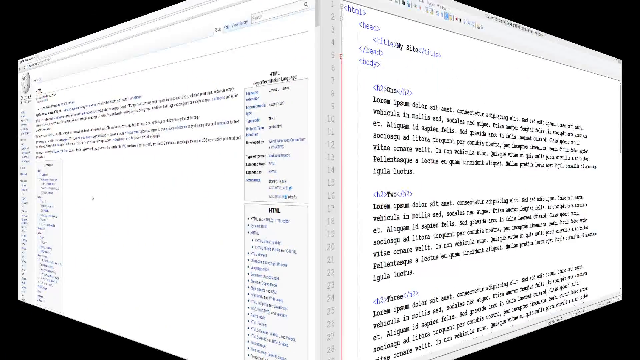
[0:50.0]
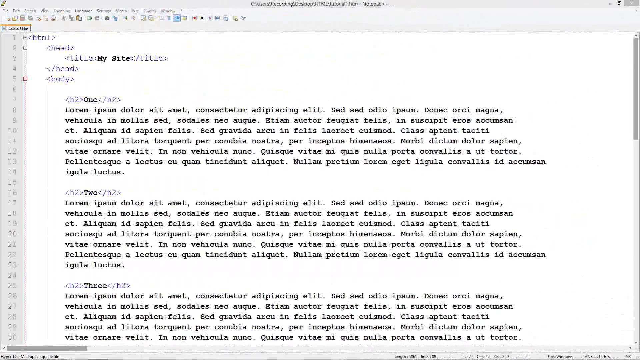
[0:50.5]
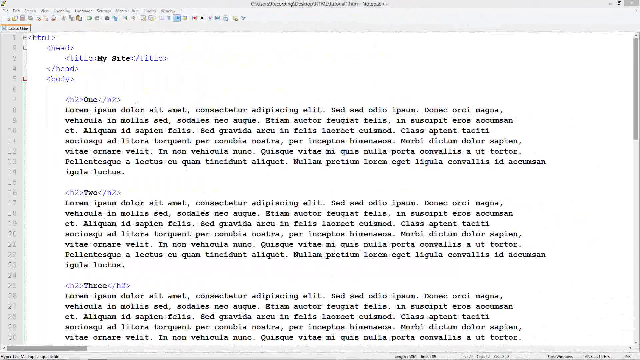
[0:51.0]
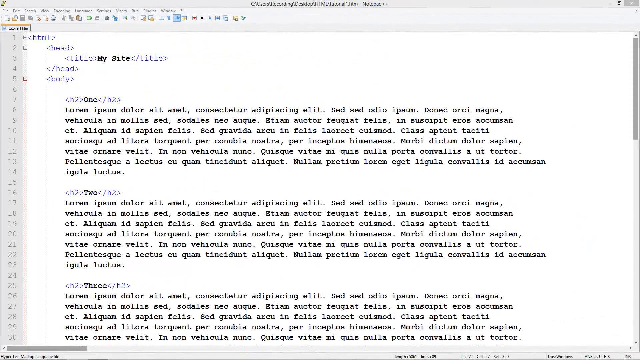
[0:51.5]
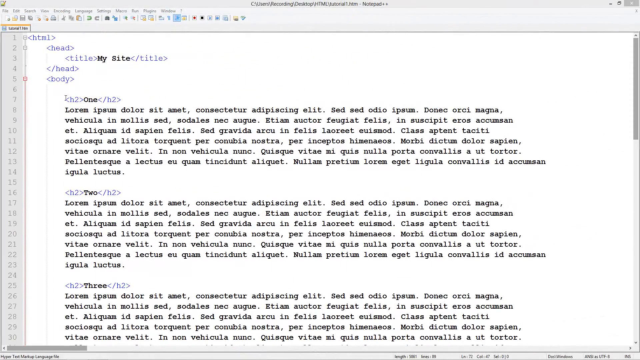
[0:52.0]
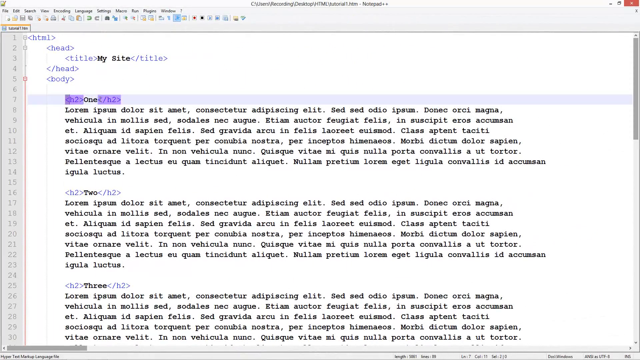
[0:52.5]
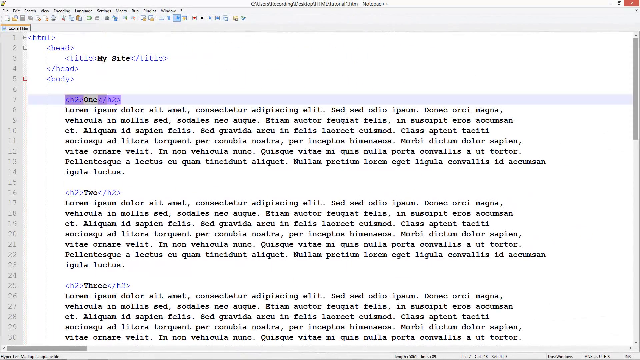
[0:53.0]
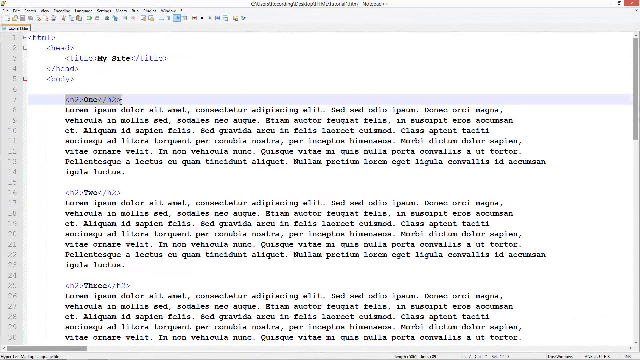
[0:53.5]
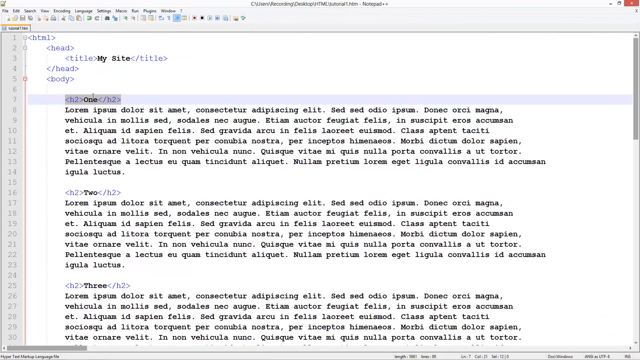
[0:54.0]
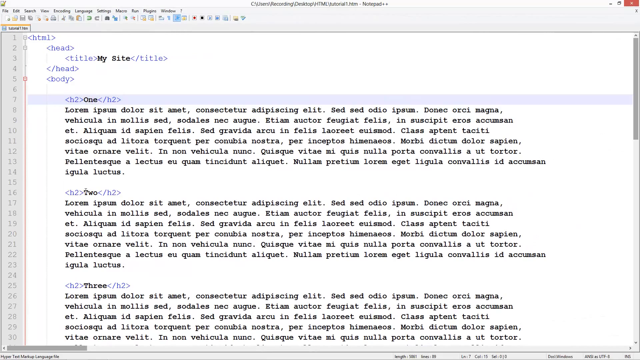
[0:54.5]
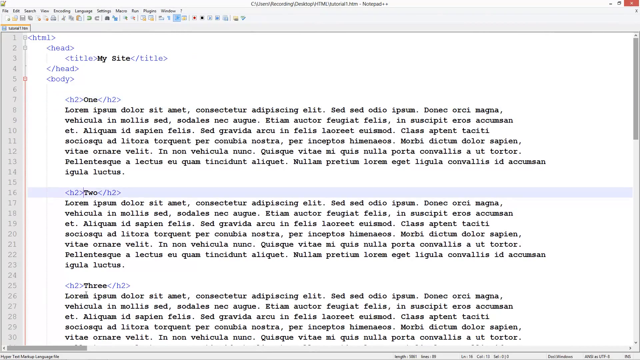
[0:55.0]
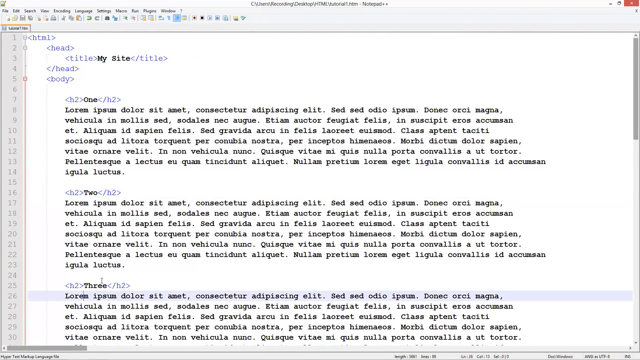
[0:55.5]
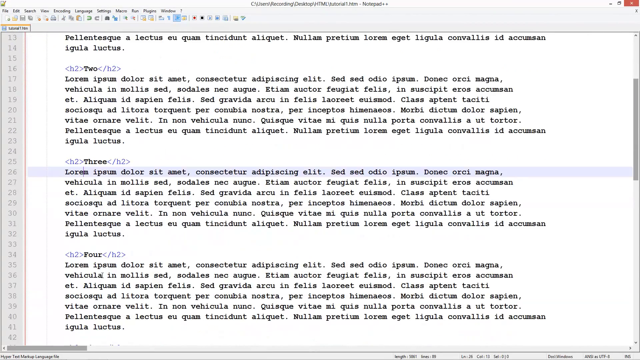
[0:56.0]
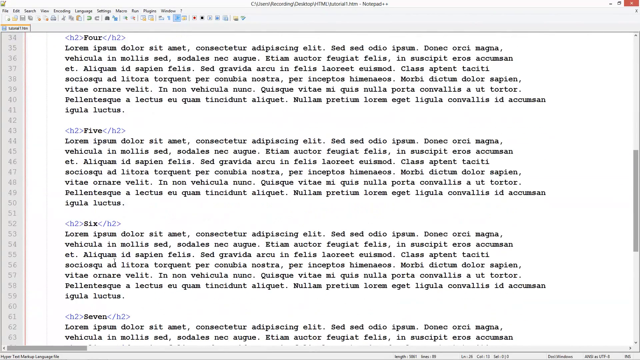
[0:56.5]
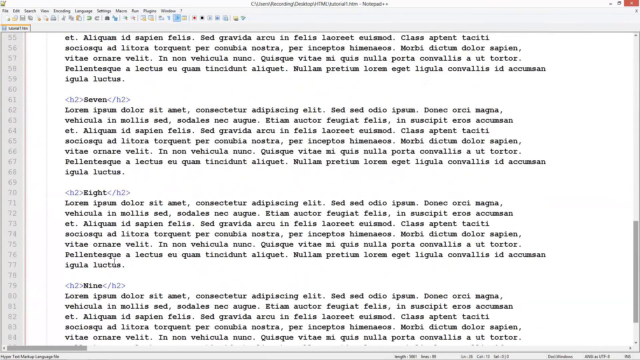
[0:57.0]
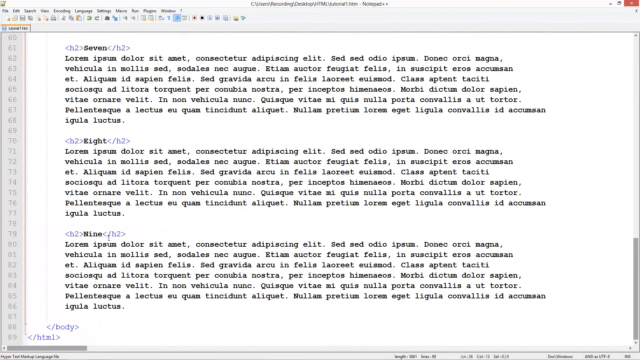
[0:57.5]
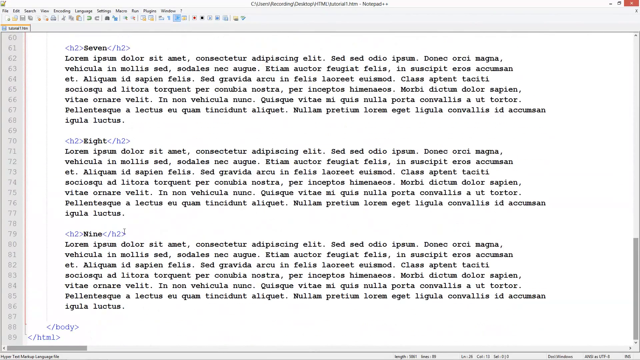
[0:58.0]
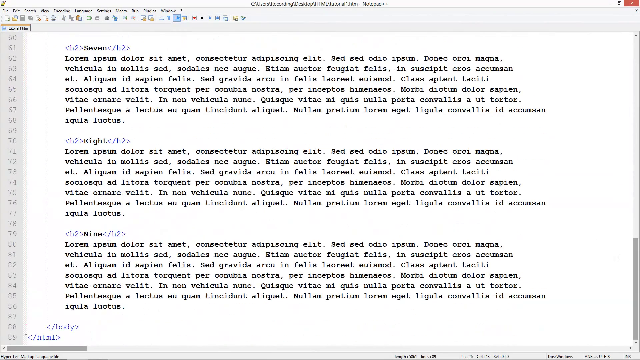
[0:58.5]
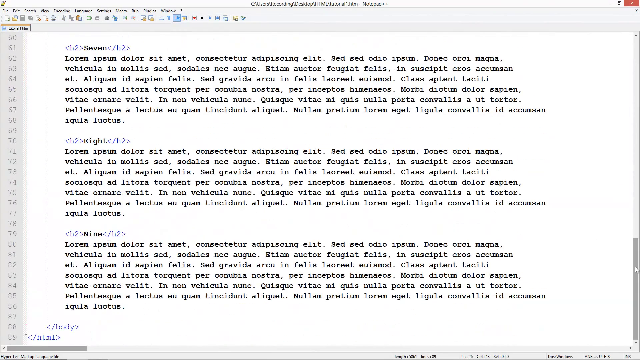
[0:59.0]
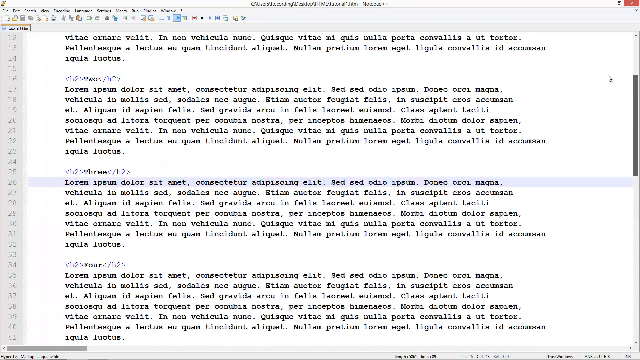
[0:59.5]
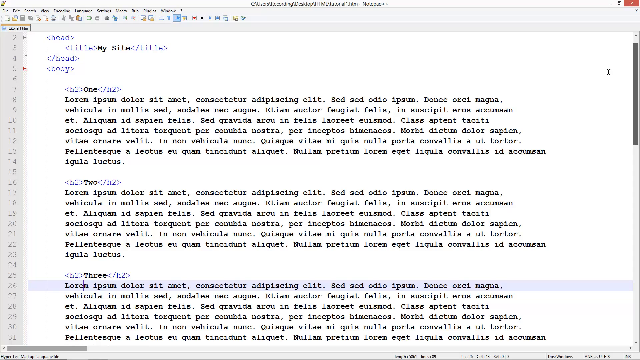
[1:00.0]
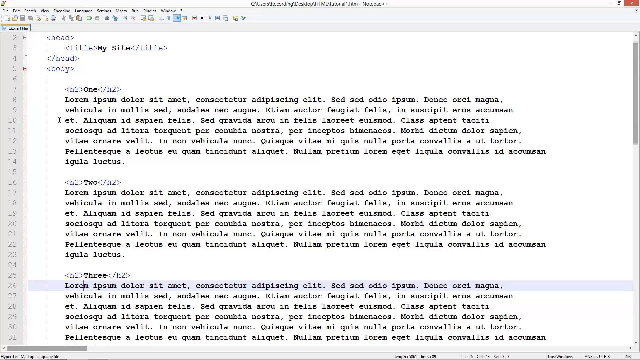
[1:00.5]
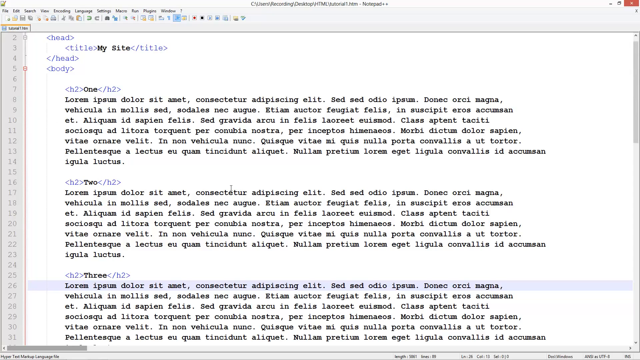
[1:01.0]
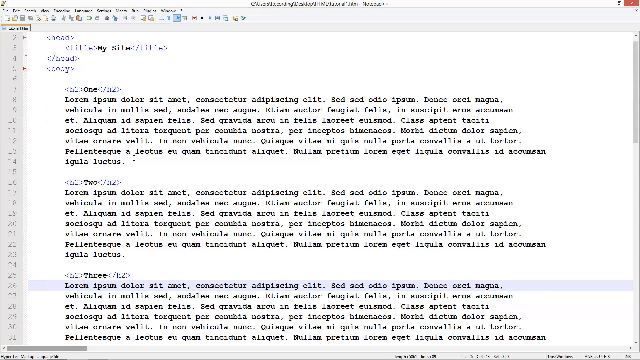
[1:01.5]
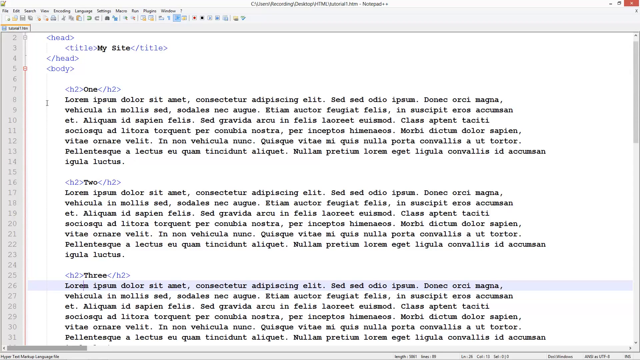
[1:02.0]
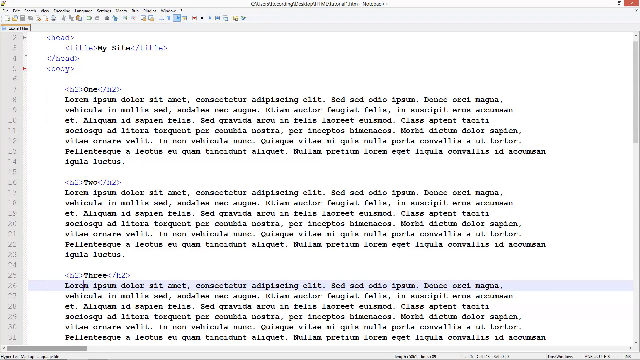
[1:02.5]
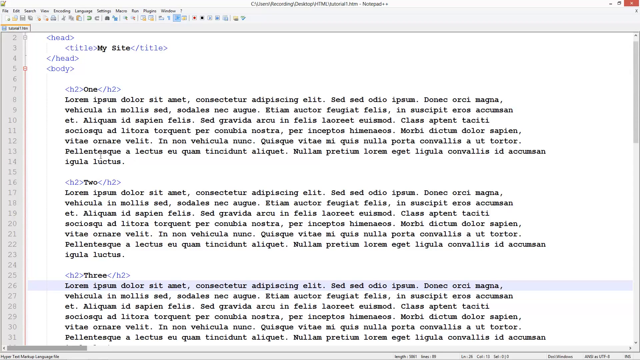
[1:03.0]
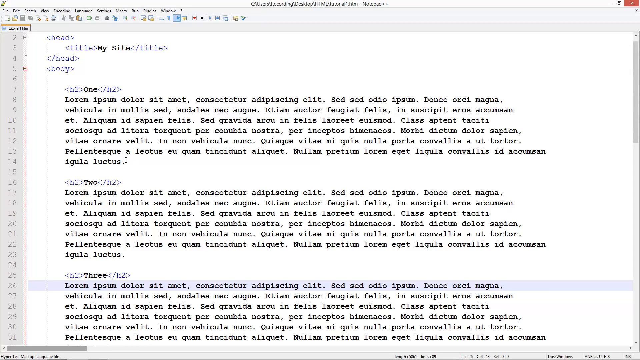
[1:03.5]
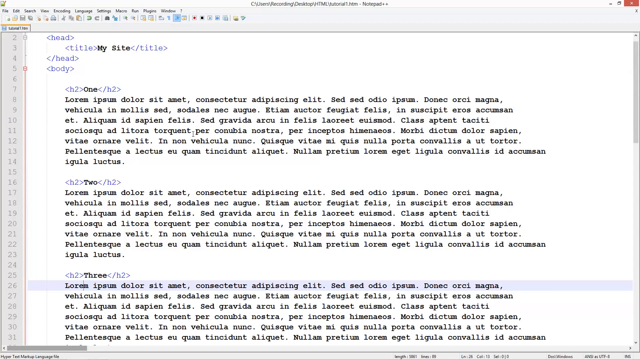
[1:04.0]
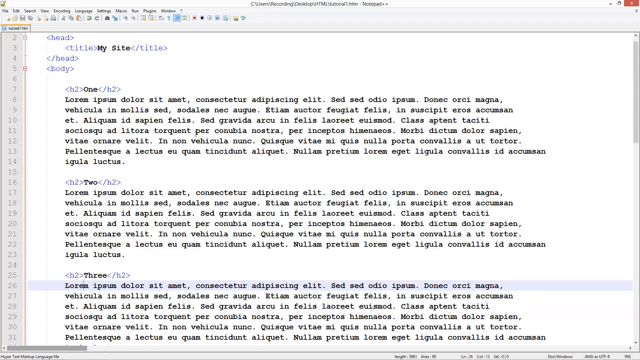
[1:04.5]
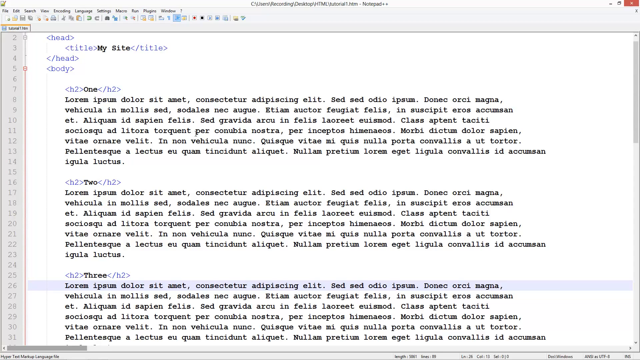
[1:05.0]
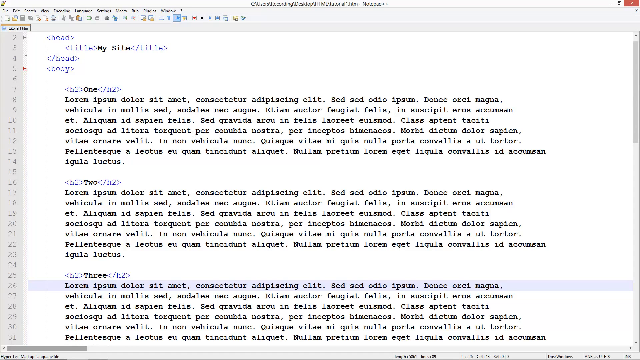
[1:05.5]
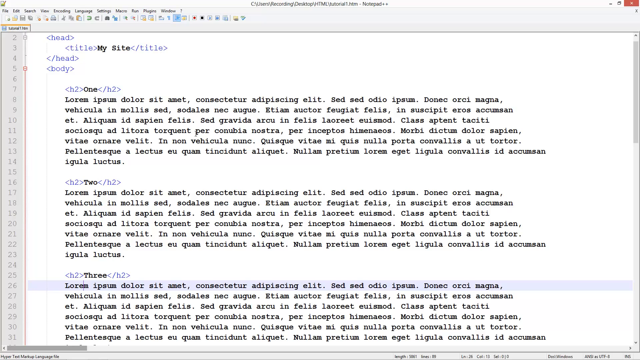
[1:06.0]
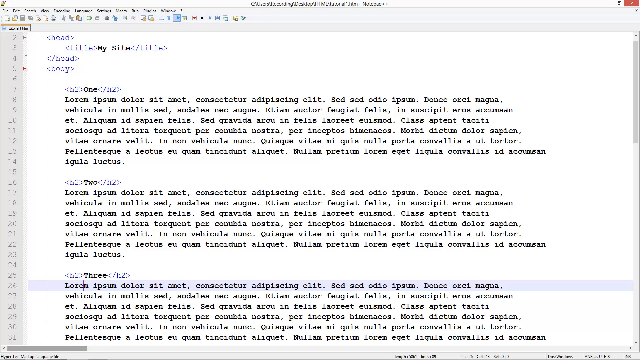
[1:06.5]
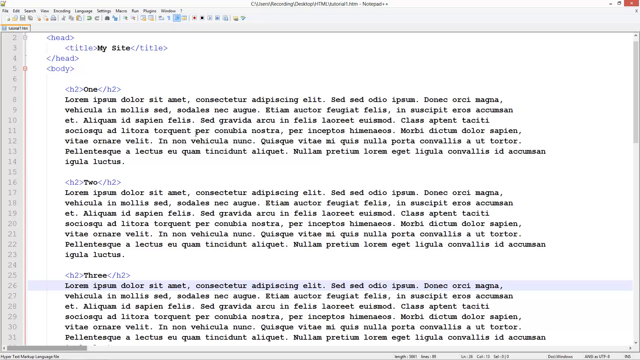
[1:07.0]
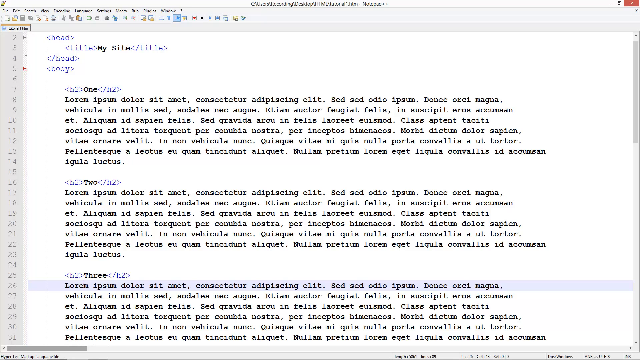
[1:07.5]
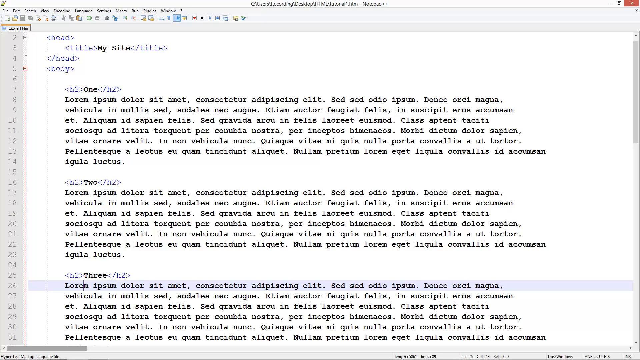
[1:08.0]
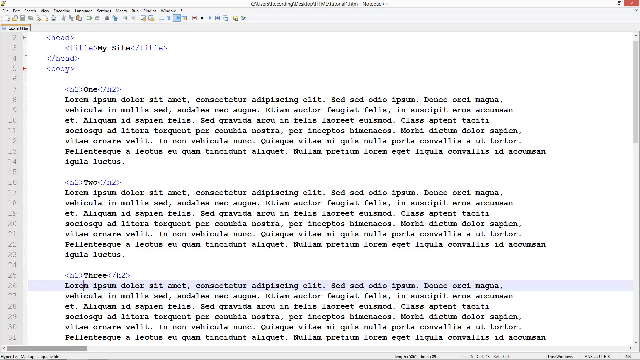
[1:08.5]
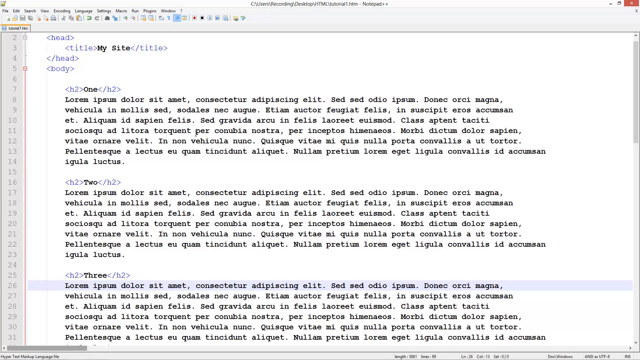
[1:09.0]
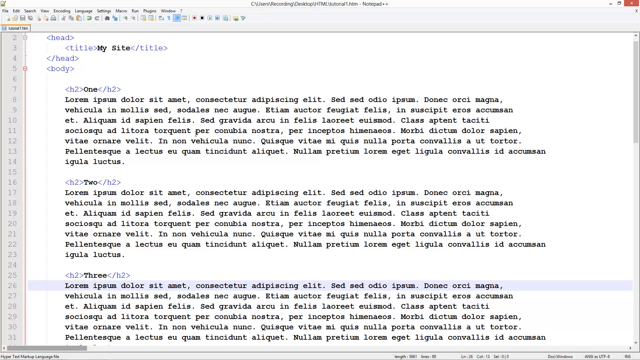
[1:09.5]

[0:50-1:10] The view switches to a new page with a transition that turns toward the left, looking a little like one side of a cube. The person is no longer on Wikipedia but in some type of document, which is somewhat blurry. Brackets appear to be purple. Next to "title" it says "my site" in black, followed by a bracket and "/title," then an unclear word, then "body." It looks like a template, with "lorem" repeated and possibly "ipsum" next to it.